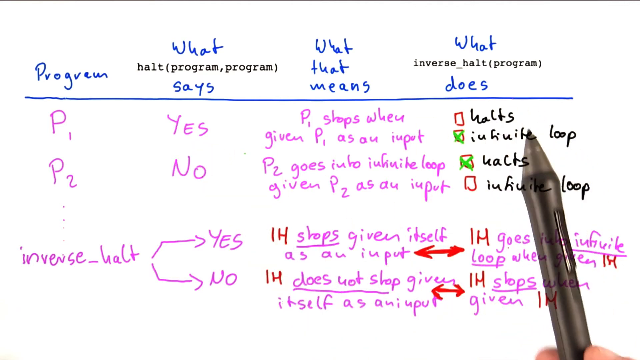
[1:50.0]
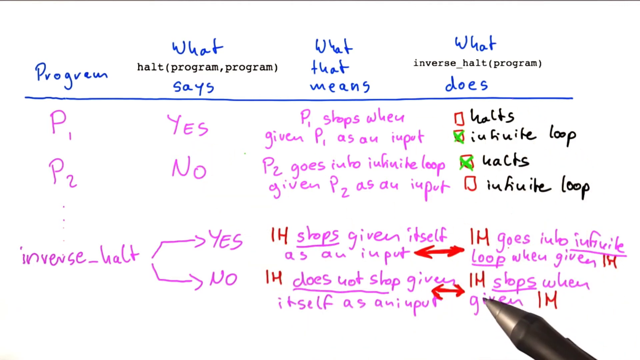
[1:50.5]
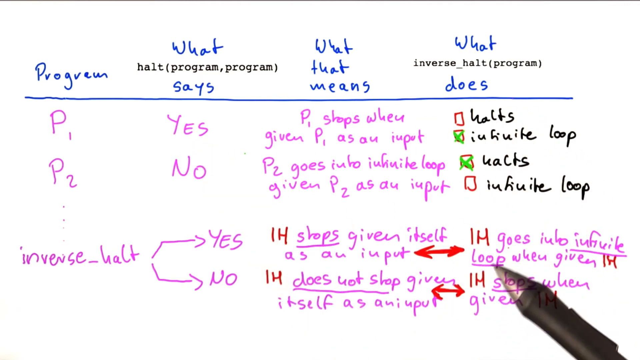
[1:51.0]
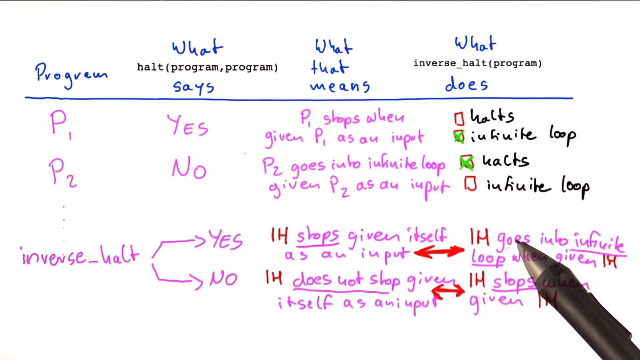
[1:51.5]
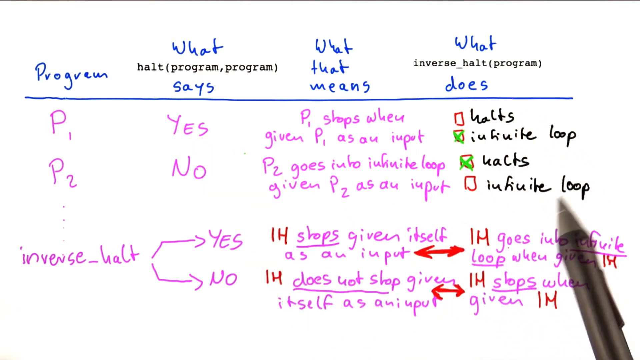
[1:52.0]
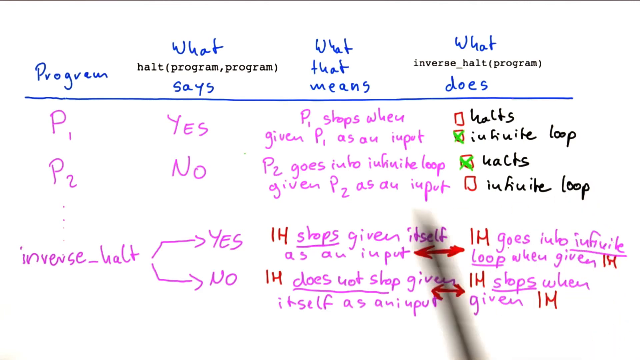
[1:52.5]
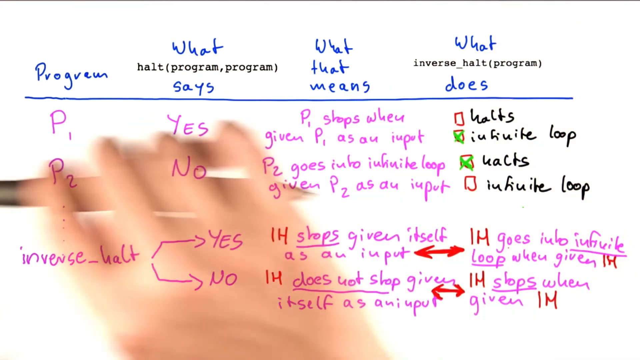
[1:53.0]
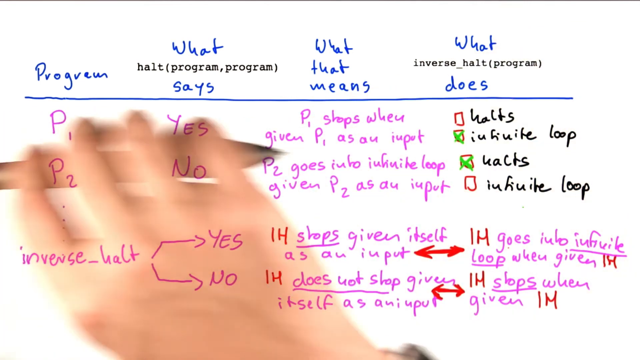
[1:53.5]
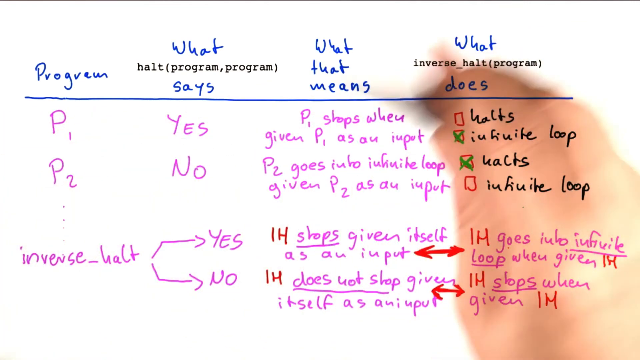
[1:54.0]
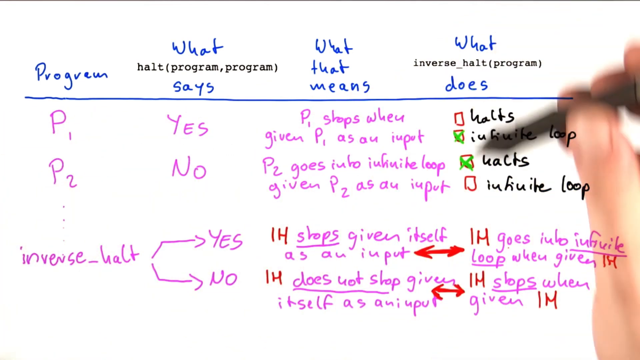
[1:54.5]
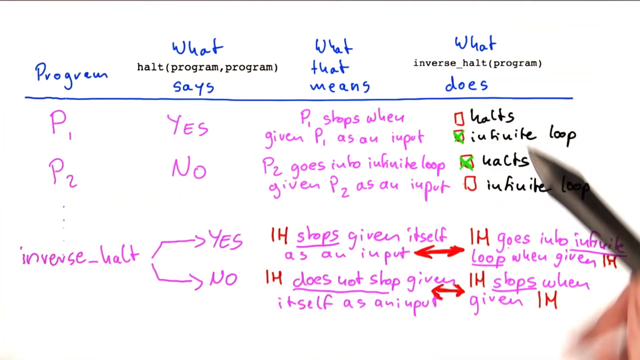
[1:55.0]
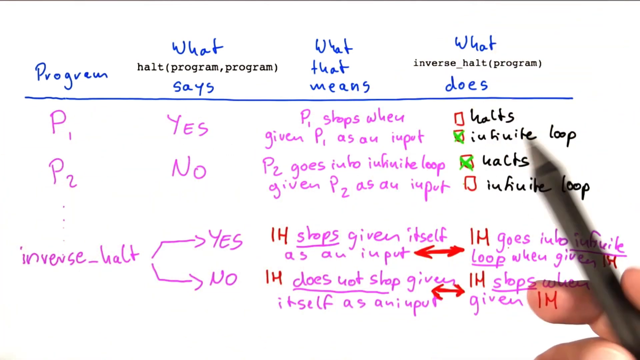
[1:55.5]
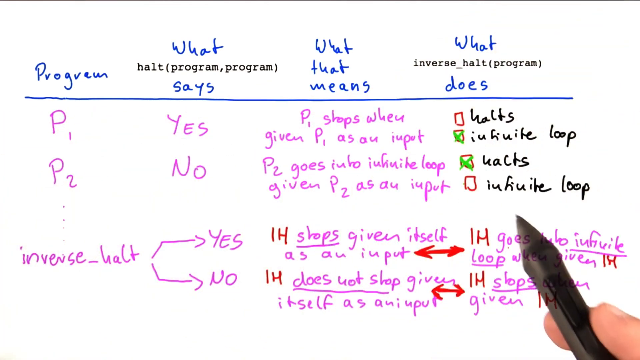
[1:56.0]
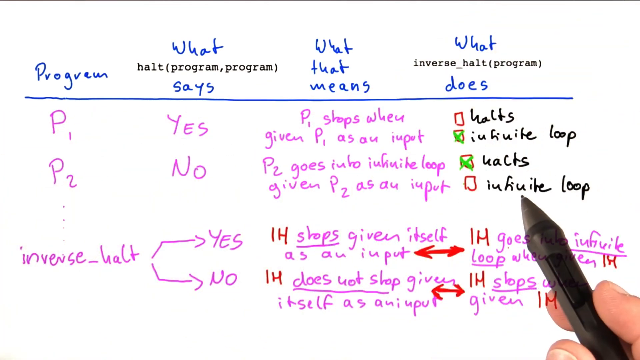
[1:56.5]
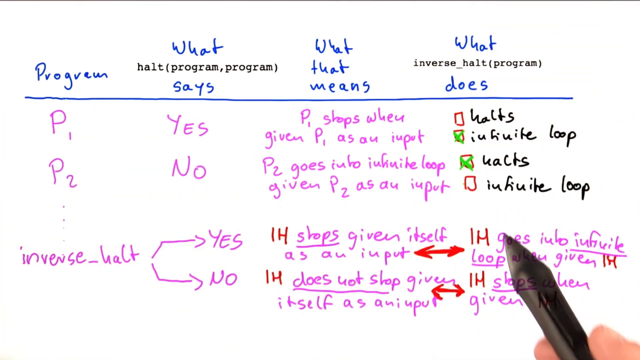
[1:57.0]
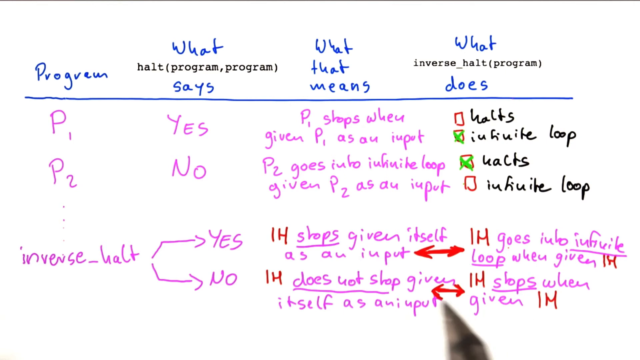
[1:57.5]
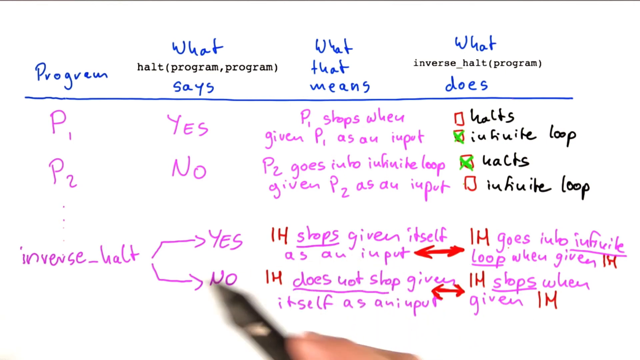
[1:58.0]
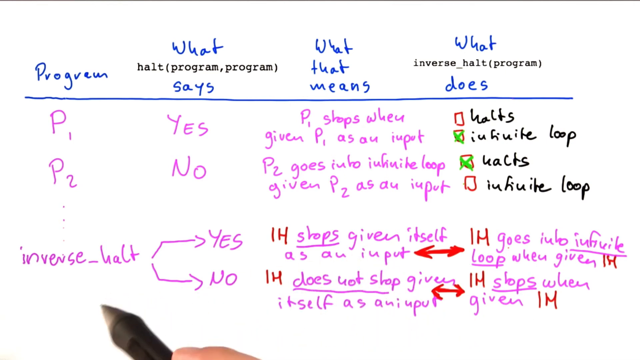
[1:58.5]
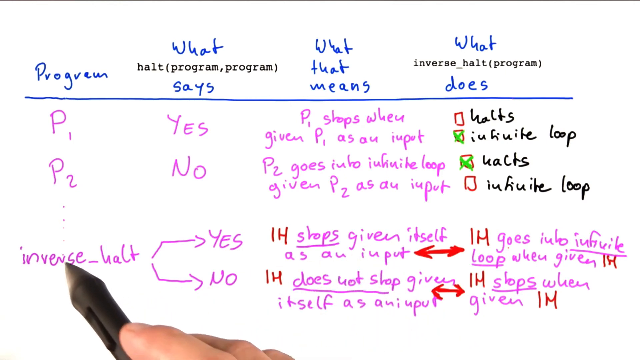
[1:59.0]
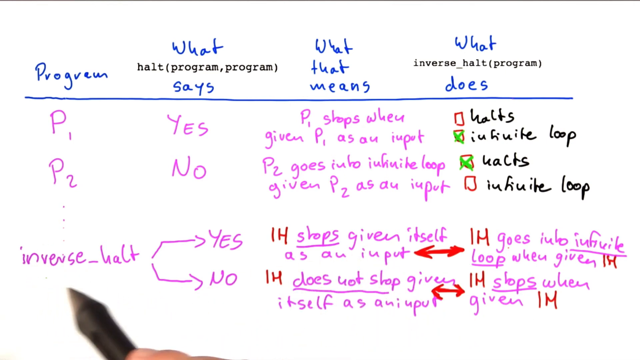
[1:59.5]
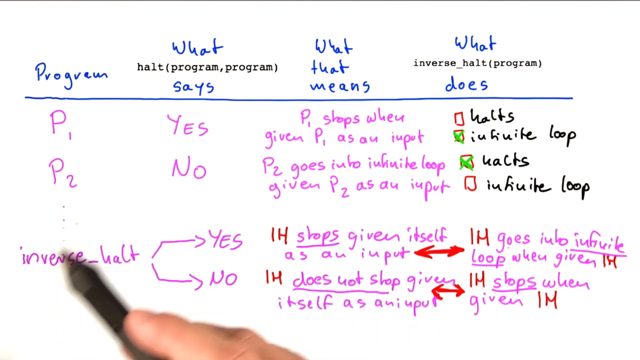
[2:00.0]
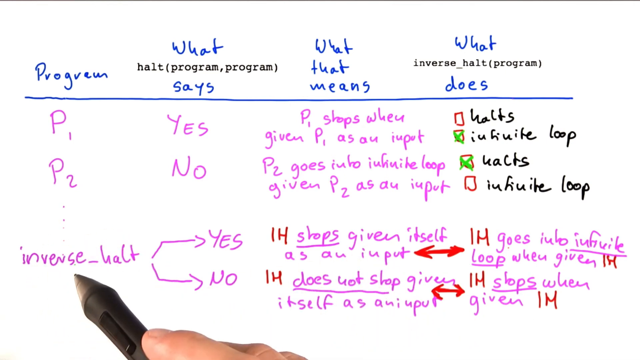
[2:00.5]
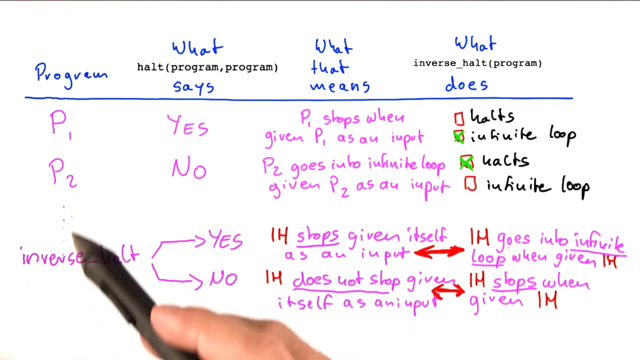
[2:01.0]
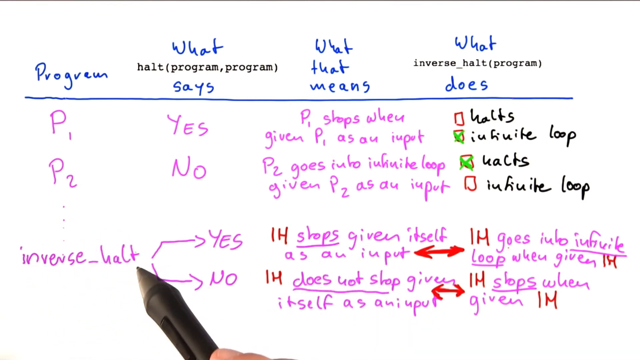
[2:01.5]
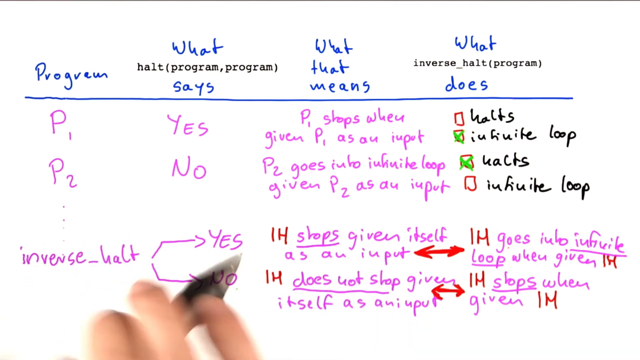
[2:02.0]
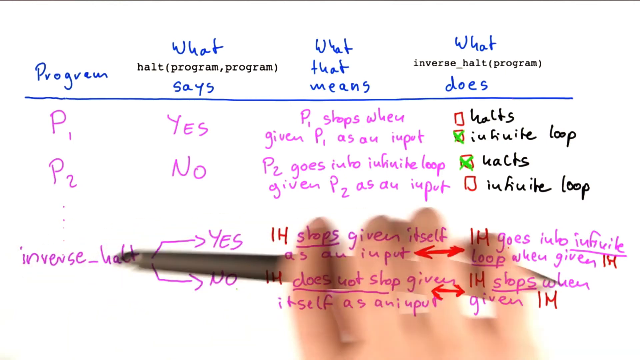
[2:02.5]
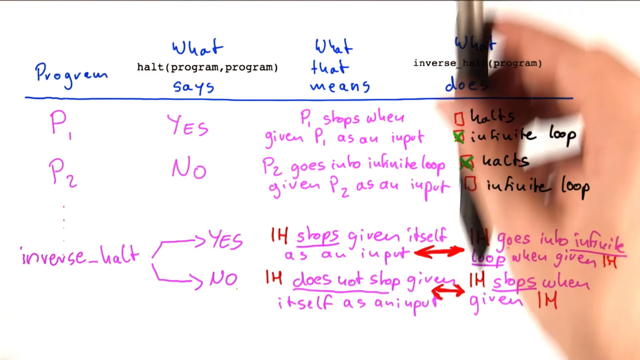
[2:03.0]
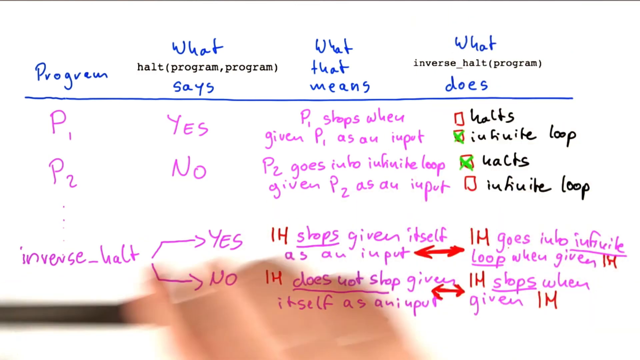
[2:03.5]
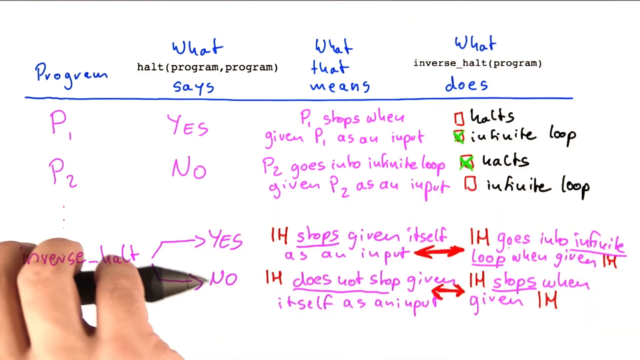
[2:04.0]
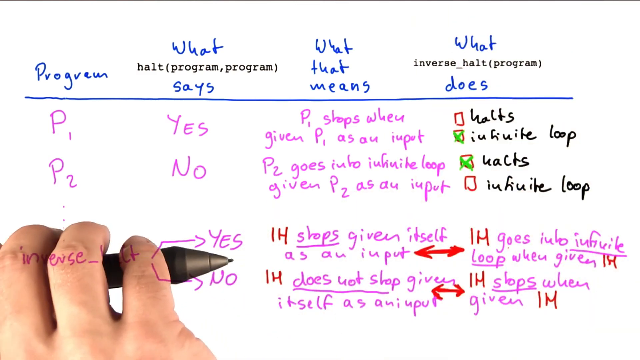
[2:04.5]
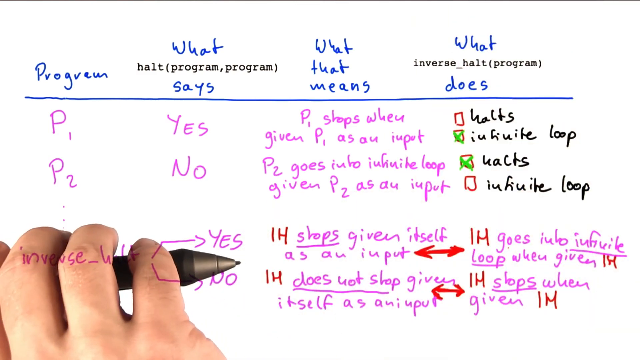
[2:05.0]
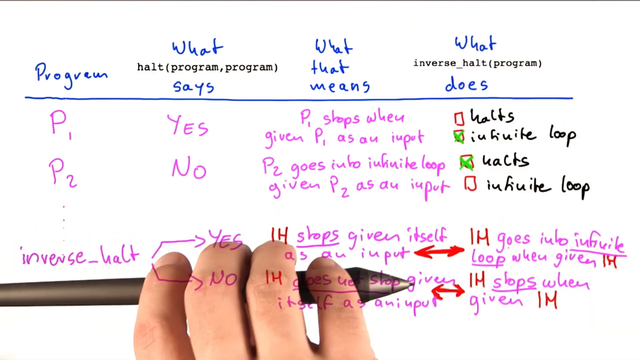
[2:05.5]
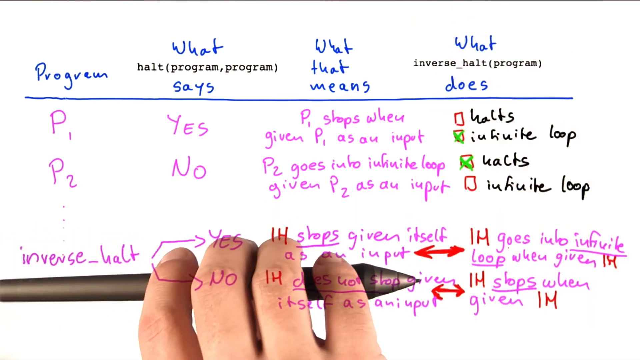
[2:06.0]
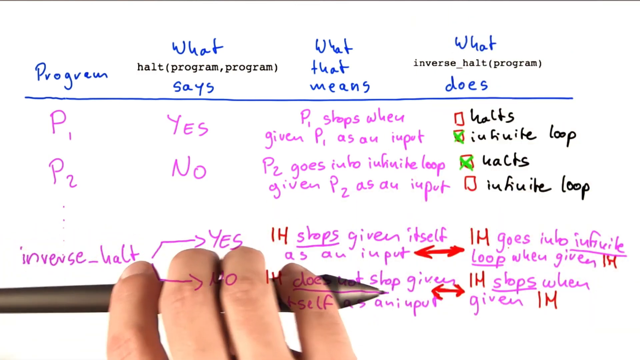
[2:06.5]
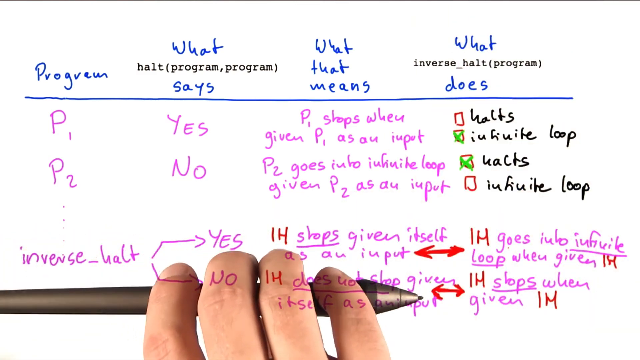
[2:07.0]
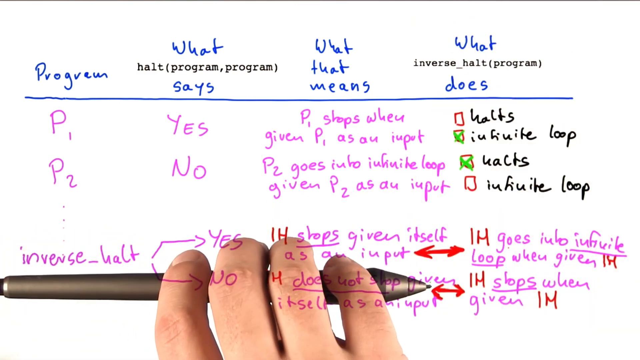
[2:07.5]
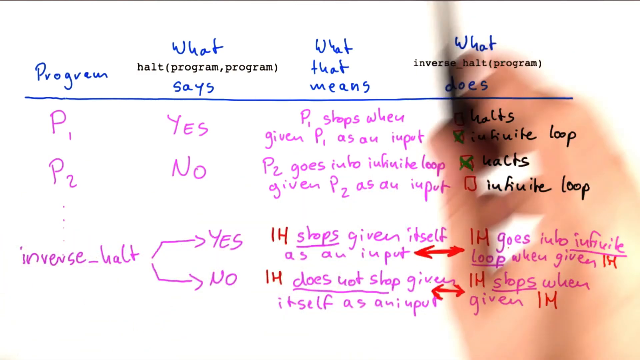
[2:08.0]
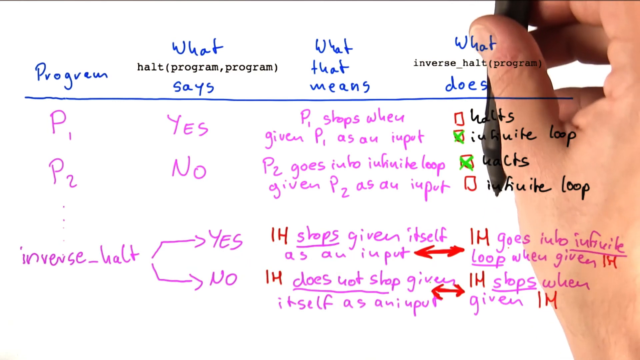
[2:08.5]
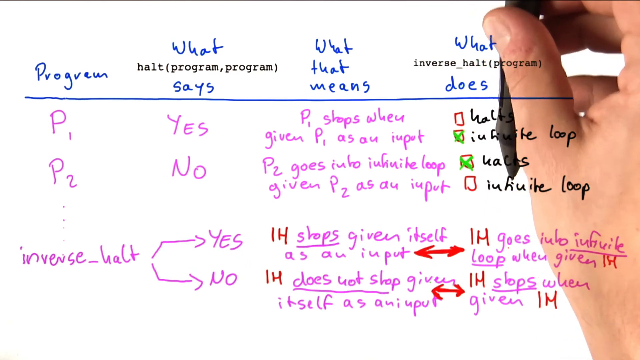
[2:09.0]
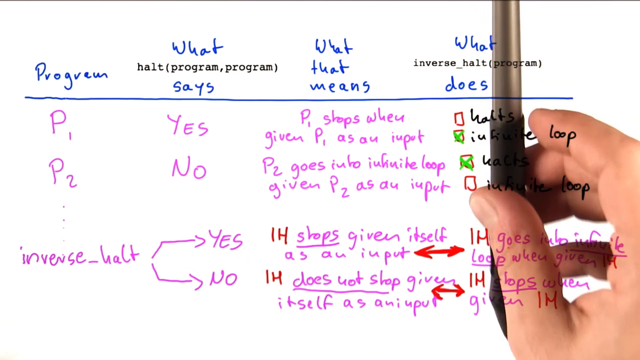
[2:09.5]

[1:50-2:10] Someone moves their hand all across a whiteboard, pointing out various parts. At the top are four categories spread from left to right: "program", "what says", "what that means" and "what does". Below are three rows. The first row is P1: it says yes, what that means is "P1 stops when given P1 as an input", and what it does is infinite loop. Below that, P2 shows the opposite: it halts. The last row shows inverse_halt with yes or no, following the same concept: in one case an infinite loop, in the other it stops. He circles inverse_halt, then moves his pen from left to right and then from top to bottom on the right side, in the last column.